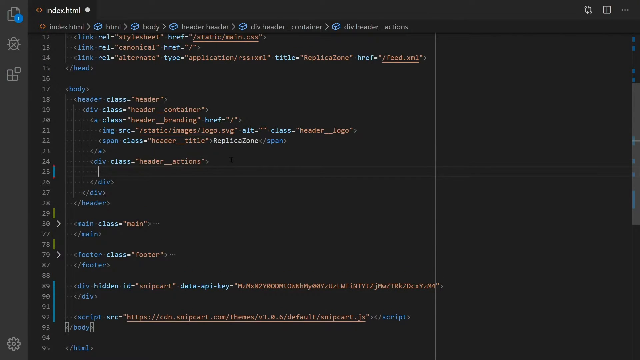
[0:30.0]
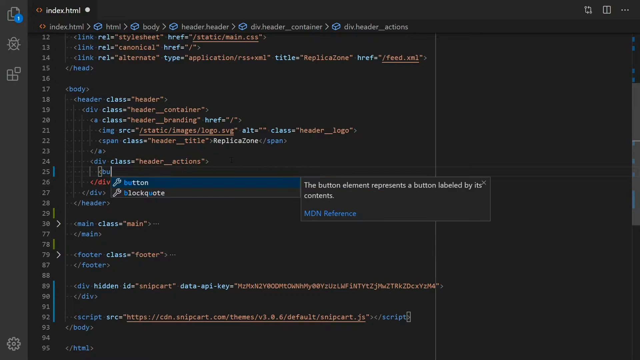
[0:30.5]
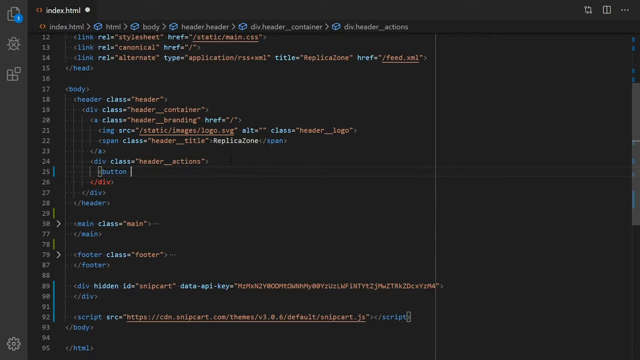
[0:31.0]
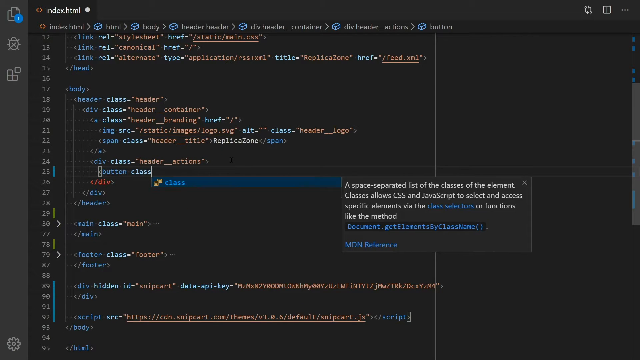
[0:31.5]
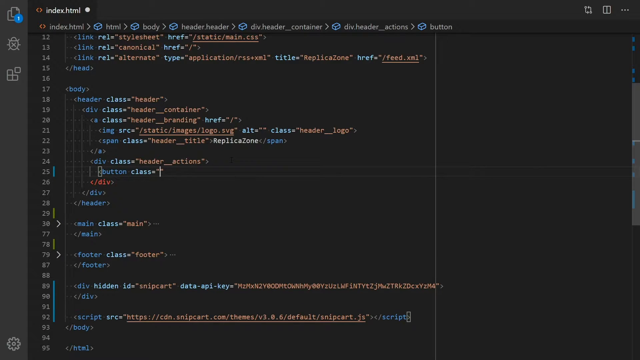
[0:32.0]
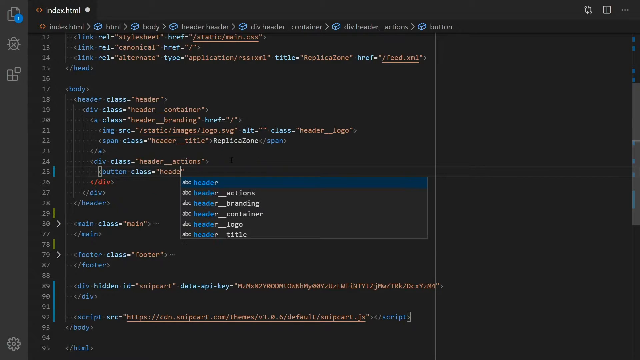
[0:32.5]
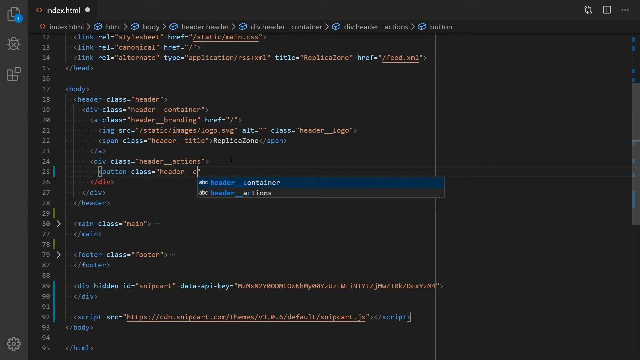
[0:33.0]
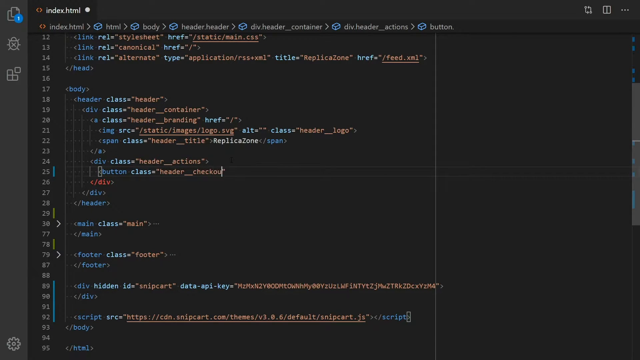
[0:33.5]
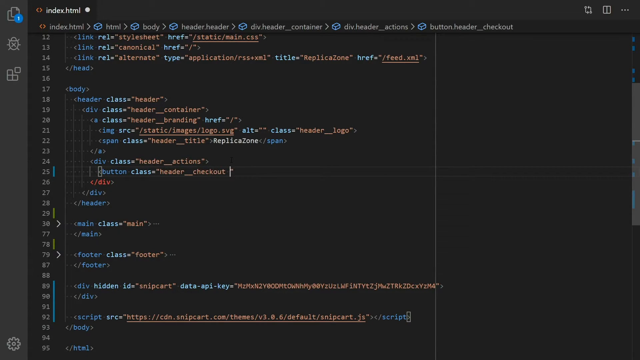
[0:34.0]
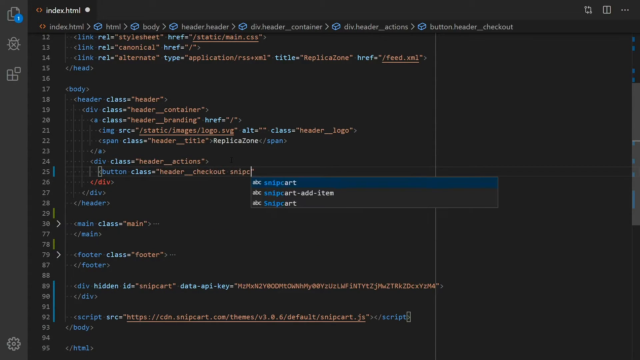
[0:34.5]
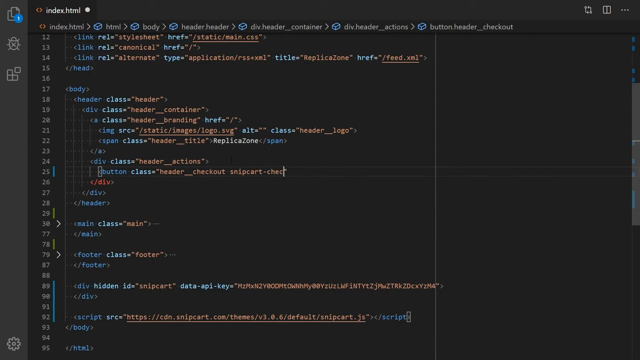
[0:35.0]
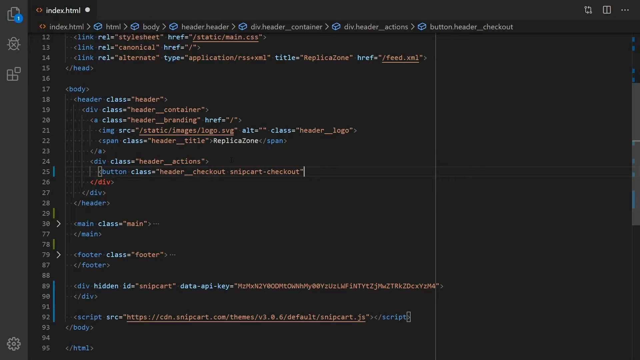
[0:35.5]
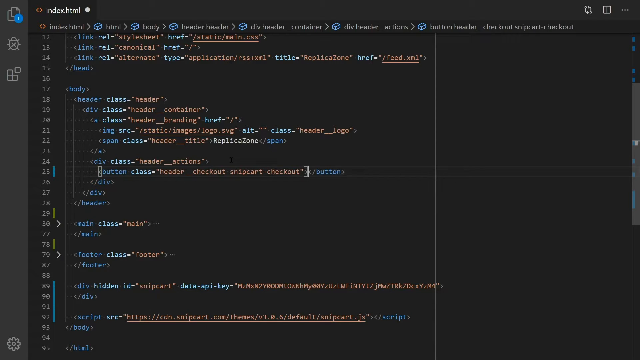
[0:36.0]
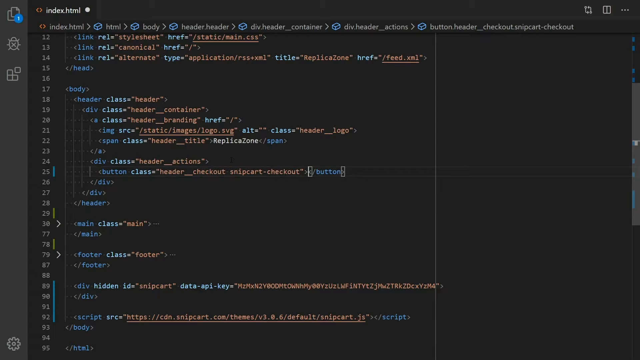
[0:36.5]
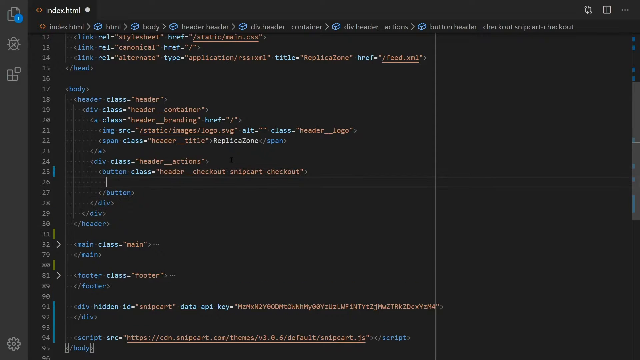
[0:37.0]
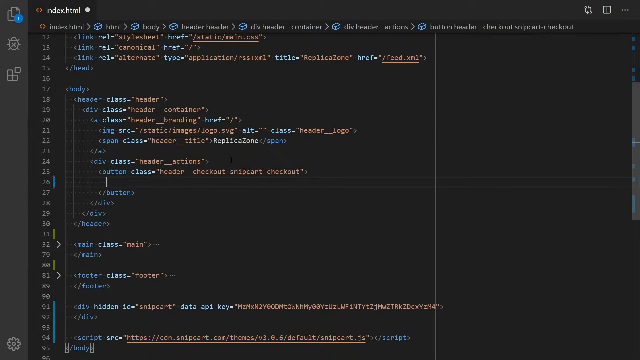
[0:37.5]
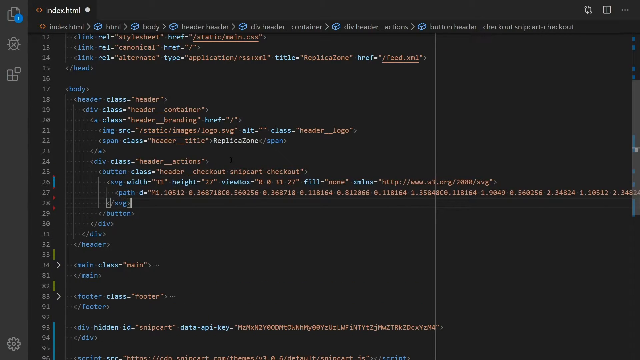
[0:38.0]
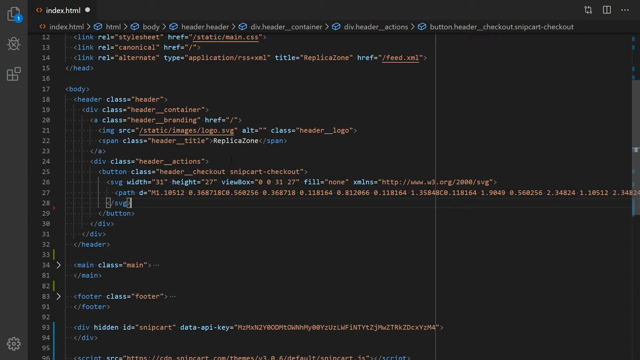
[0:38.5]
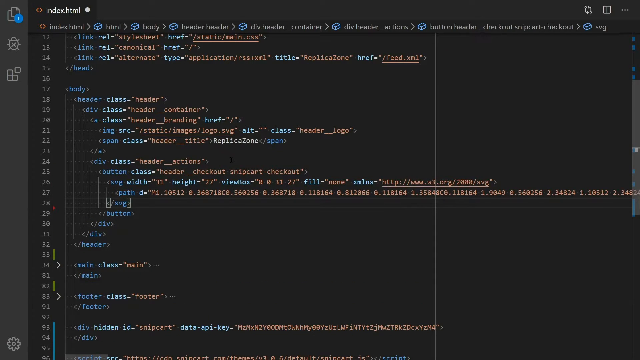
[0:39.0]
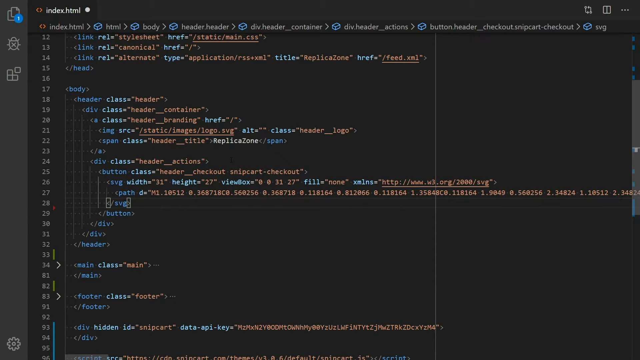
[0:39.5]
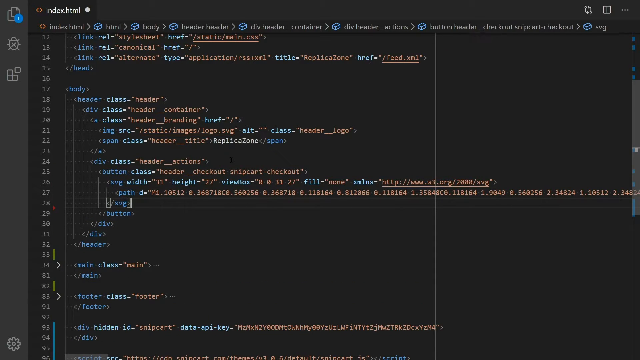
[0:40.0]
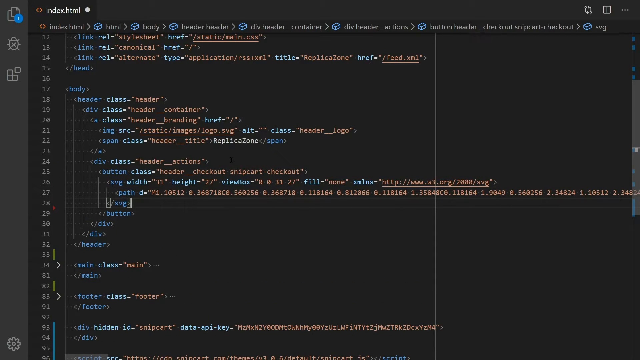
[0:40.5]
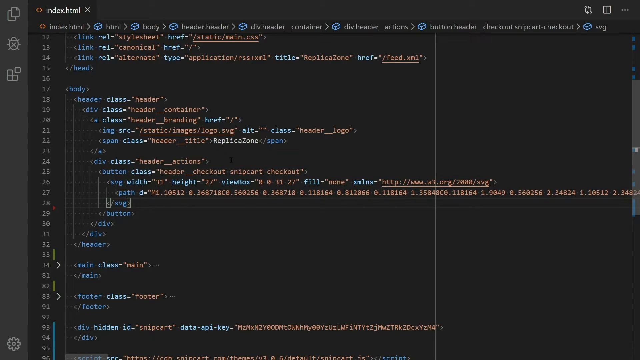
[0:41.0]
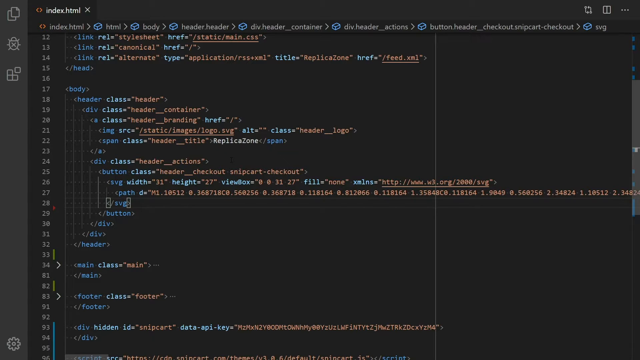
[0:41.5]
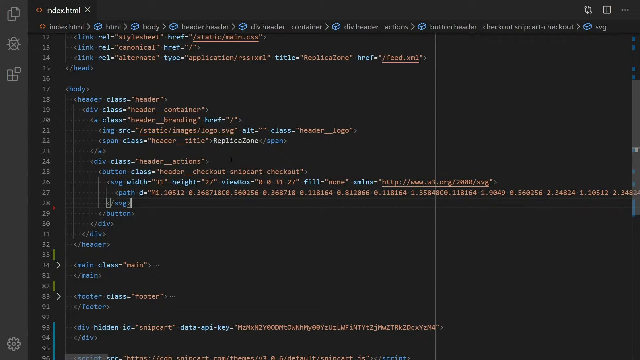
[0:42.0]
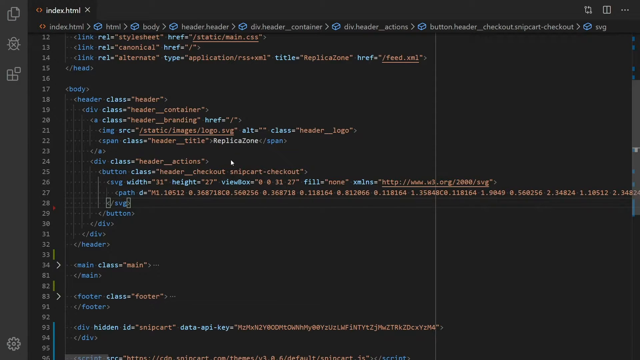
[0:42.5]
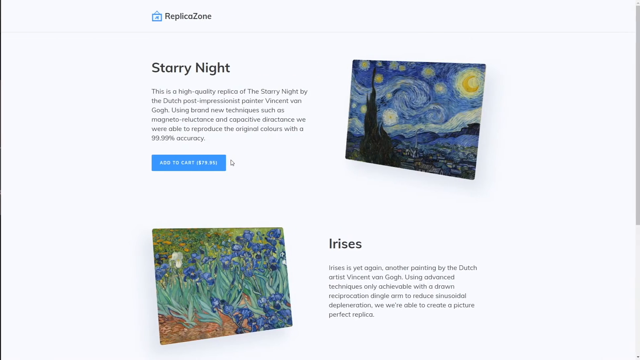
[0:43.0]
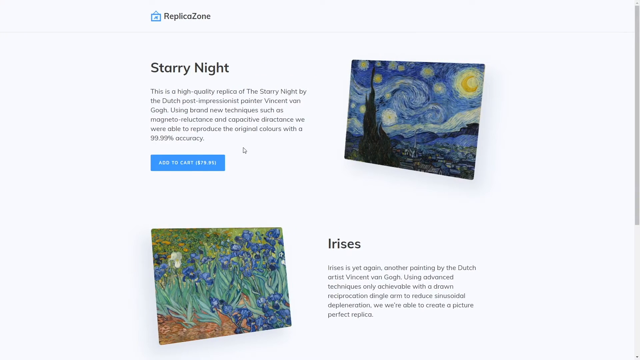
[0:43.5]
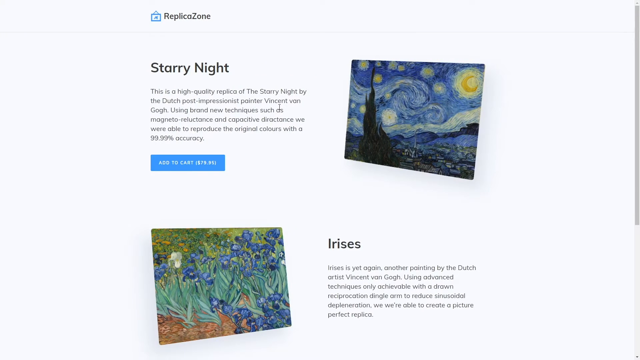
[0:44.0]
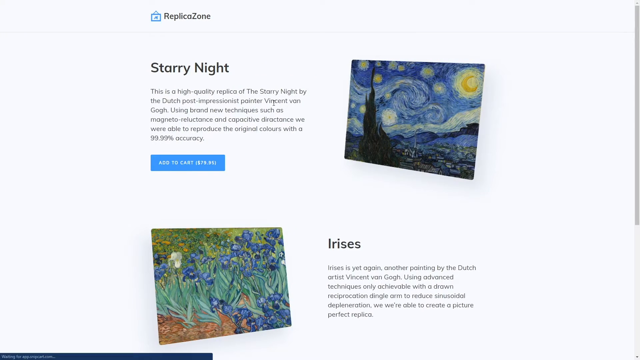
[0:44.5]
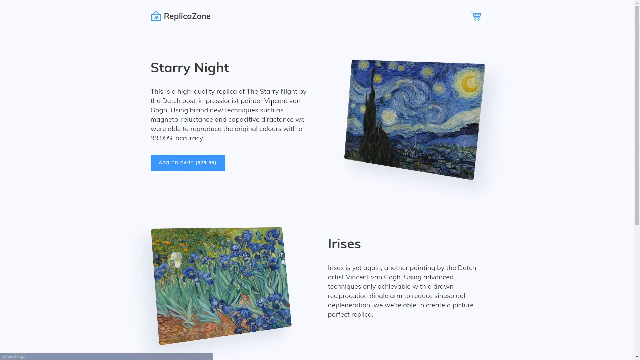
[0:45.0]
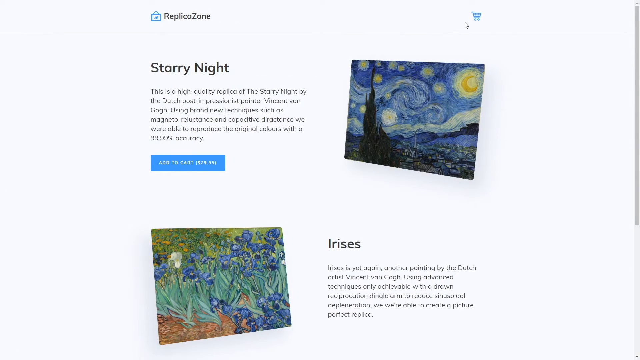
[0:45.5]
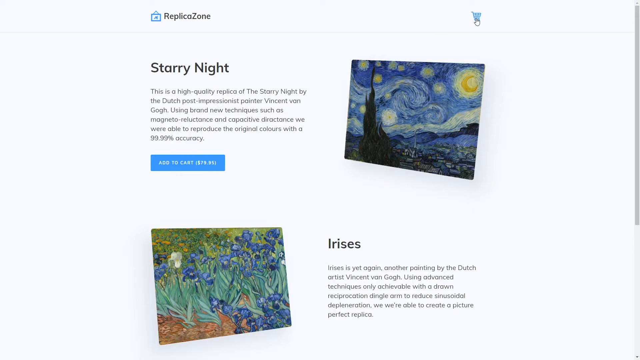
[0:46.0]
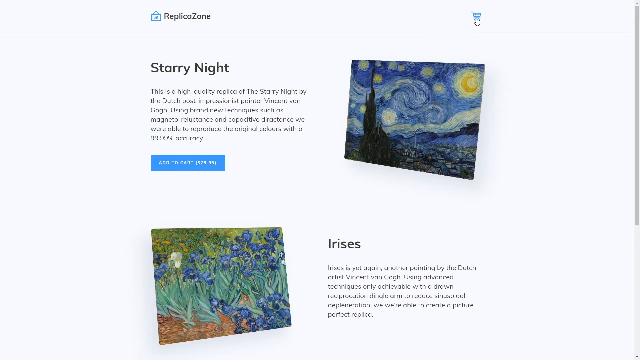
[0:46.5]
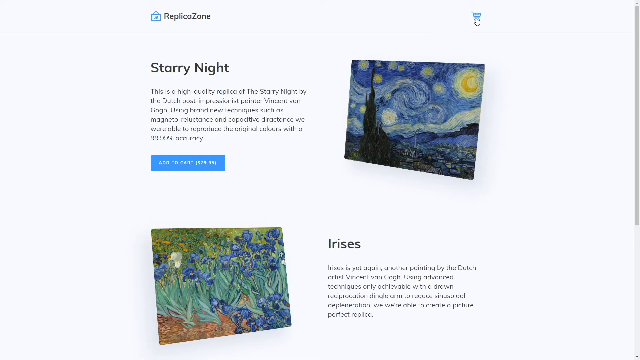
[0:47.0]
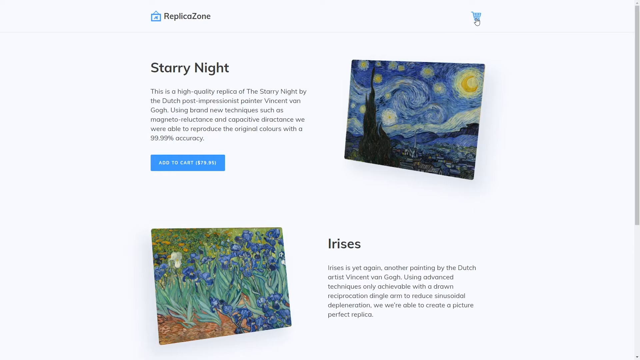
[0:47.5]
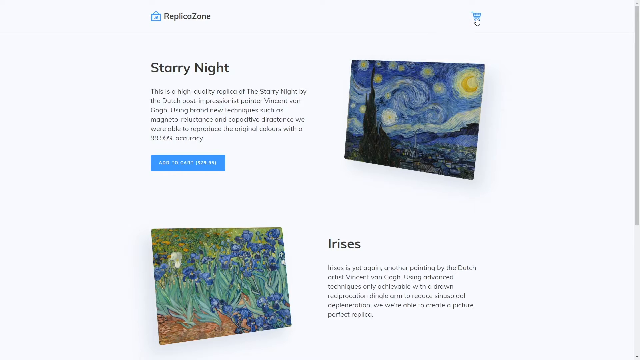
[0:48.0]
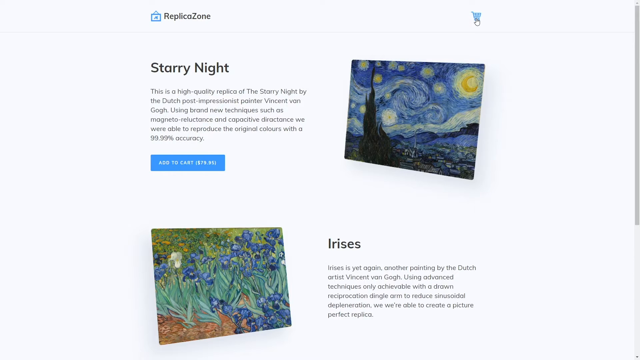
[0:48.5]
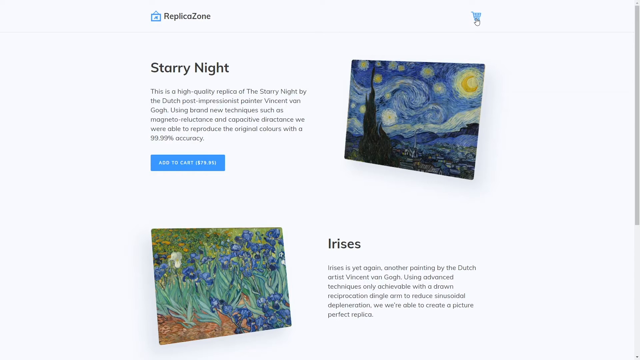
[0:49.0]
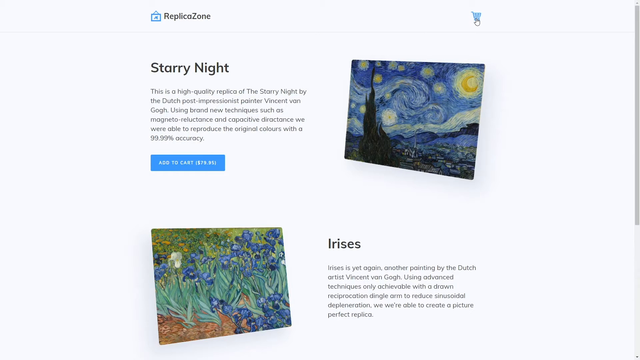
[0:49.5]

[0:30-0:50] On the black code page, a cursor moves across the screen as code is typed out. The existing code is in yellow, blue and an orangish color, and the new code being added is also in different colors: blue, green and red. It is typed across two different lines, and the cursor moves down; the white cursor blinks. The view then goes back to the page with the two Van Gogh paintings, where a cursor at the top leads back to the code page. More code is typed in the middle of the screen in blue, yellow and red, with the cursor moving from left to right. On the white page there is a little blue shopping cart icon. The cursor has become a little hand, and it moves up to the shopping cart icon, located in the right-hand corner above the Starry Night image.